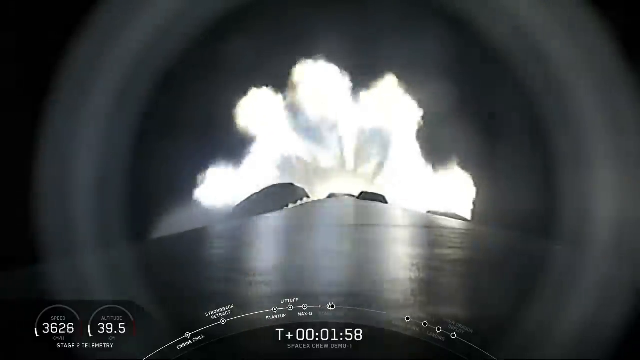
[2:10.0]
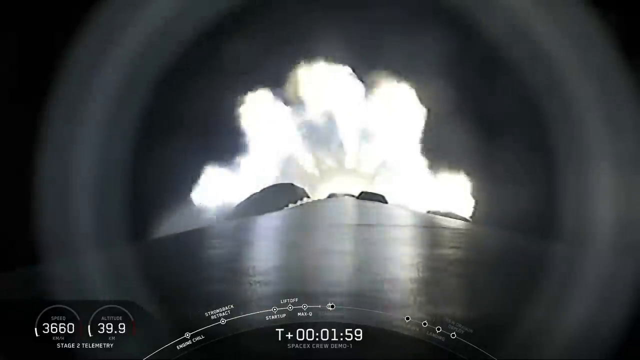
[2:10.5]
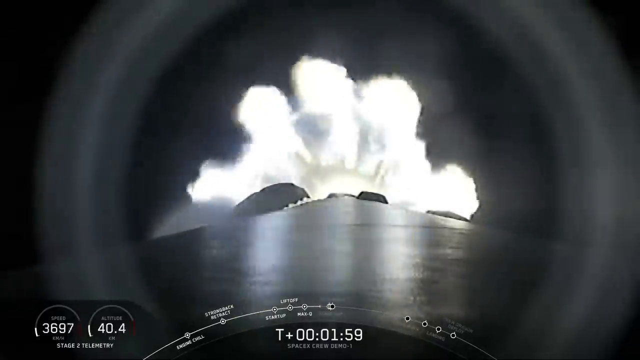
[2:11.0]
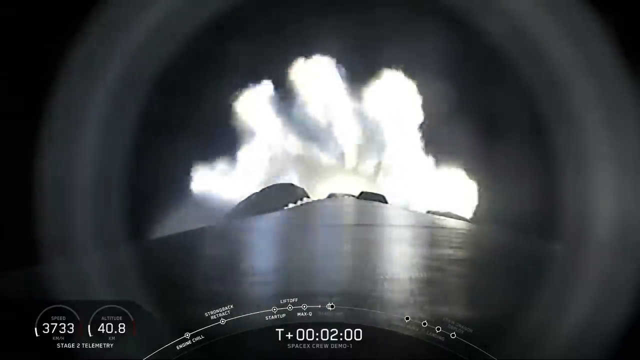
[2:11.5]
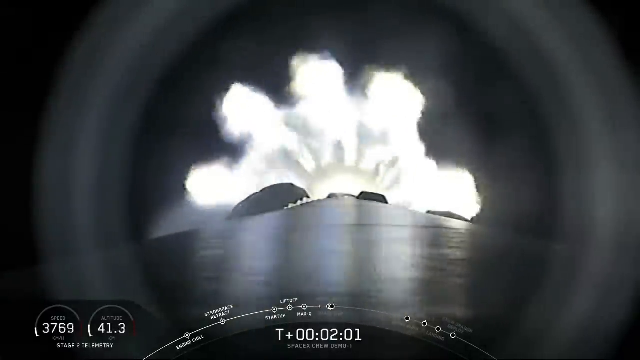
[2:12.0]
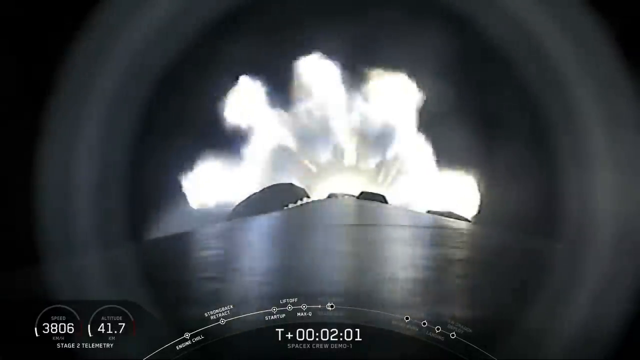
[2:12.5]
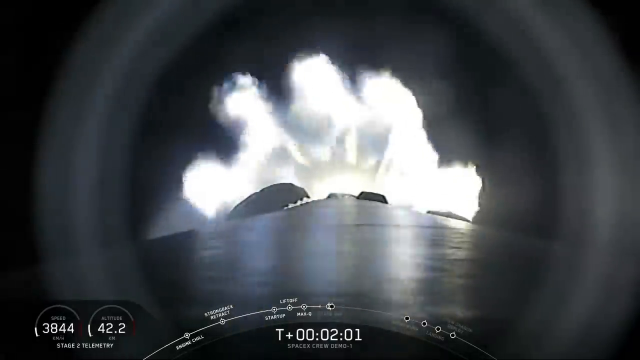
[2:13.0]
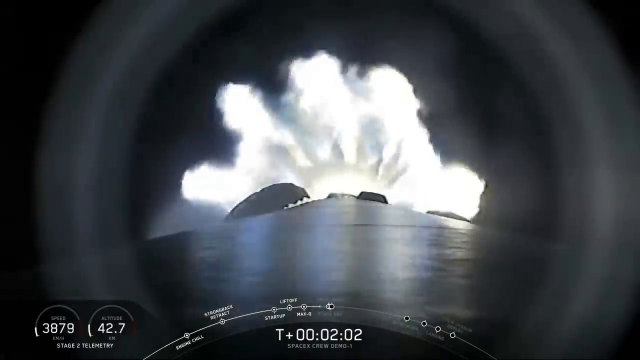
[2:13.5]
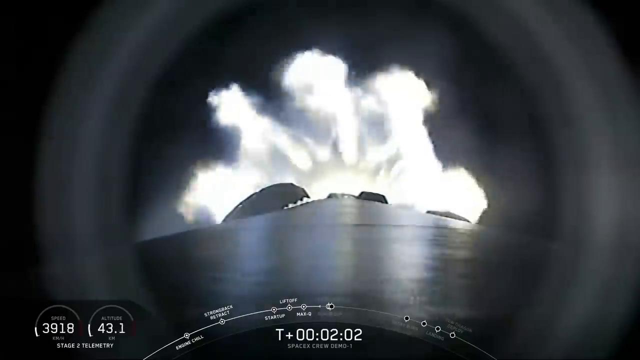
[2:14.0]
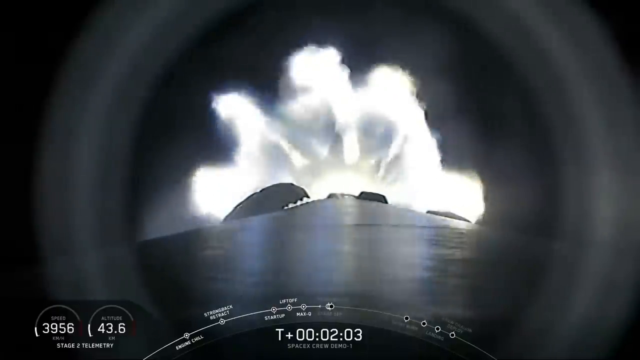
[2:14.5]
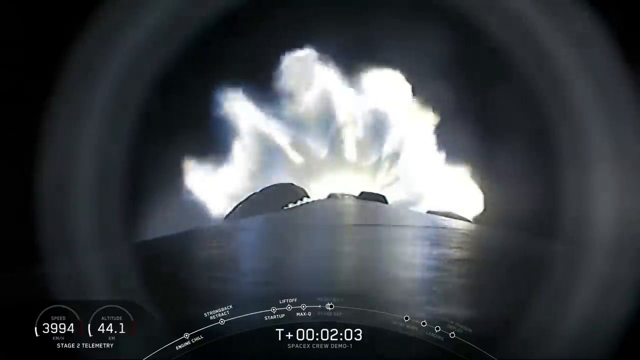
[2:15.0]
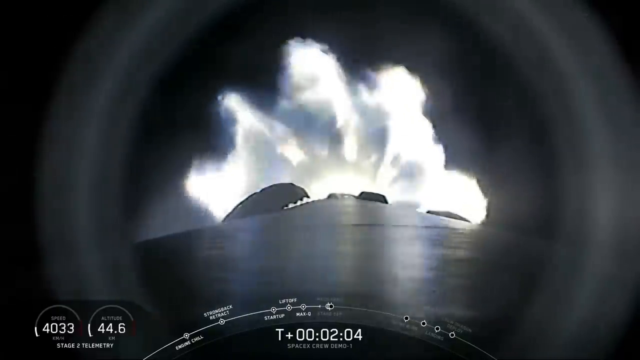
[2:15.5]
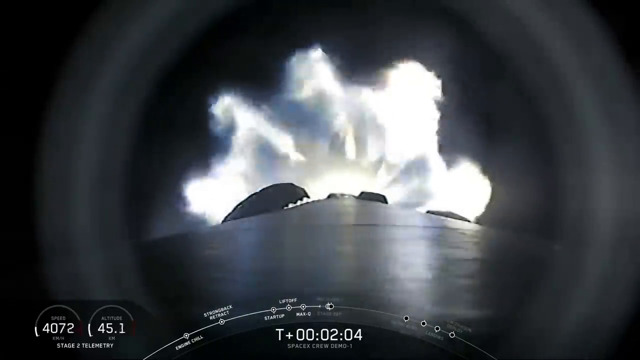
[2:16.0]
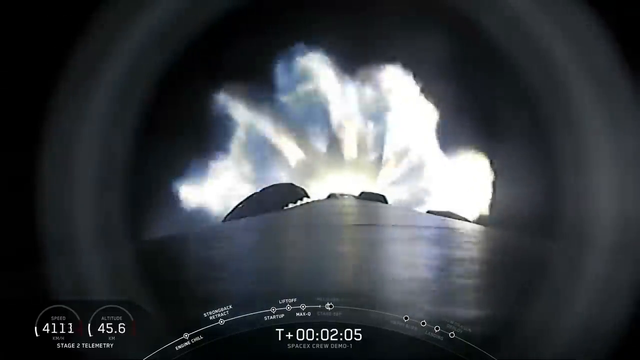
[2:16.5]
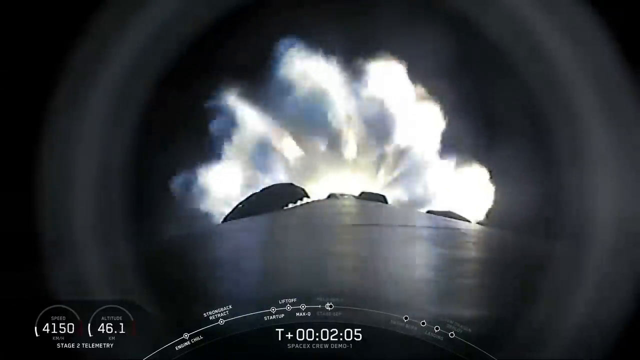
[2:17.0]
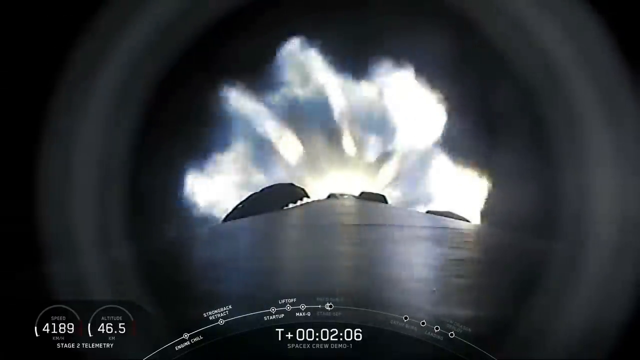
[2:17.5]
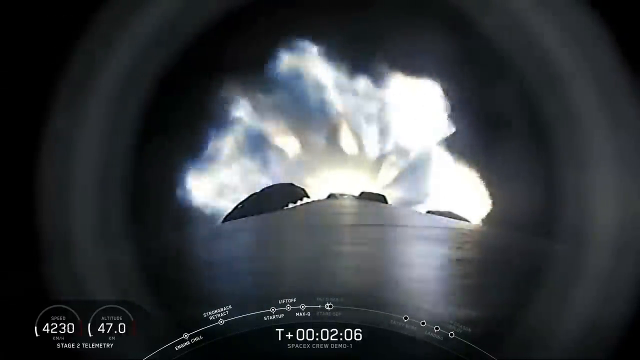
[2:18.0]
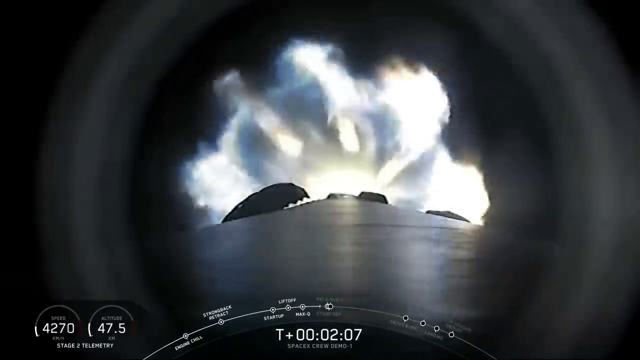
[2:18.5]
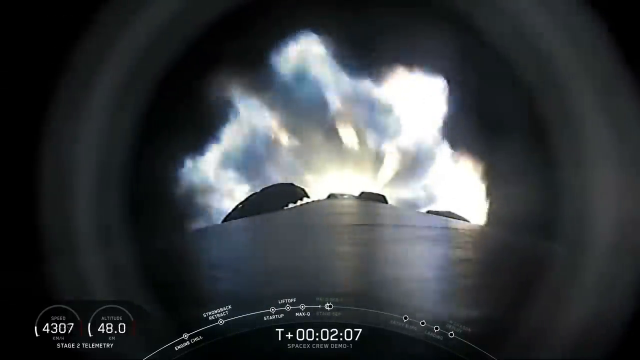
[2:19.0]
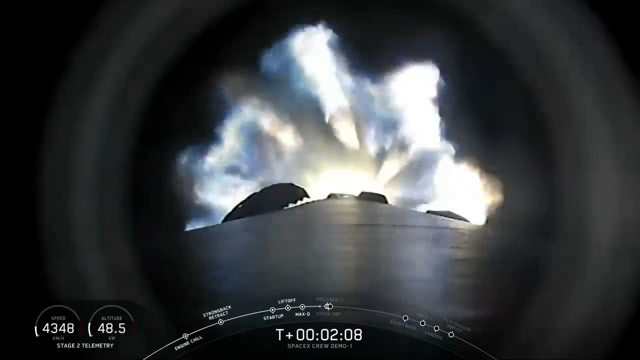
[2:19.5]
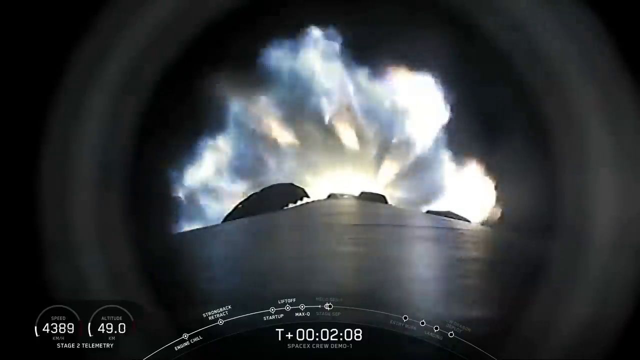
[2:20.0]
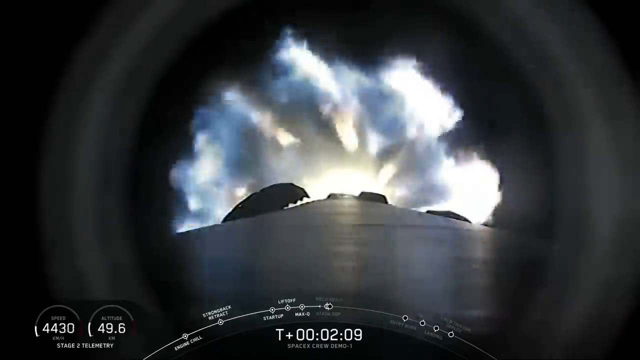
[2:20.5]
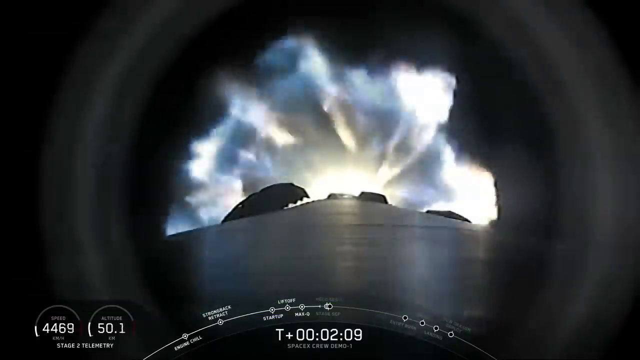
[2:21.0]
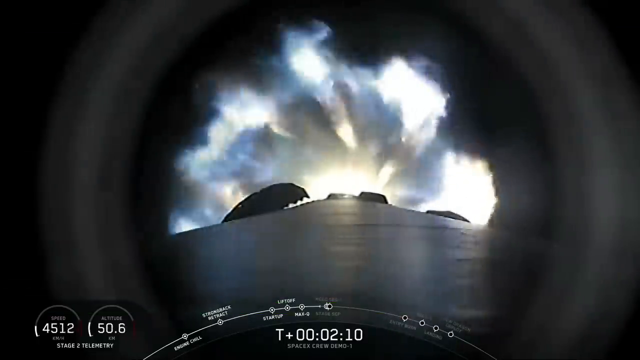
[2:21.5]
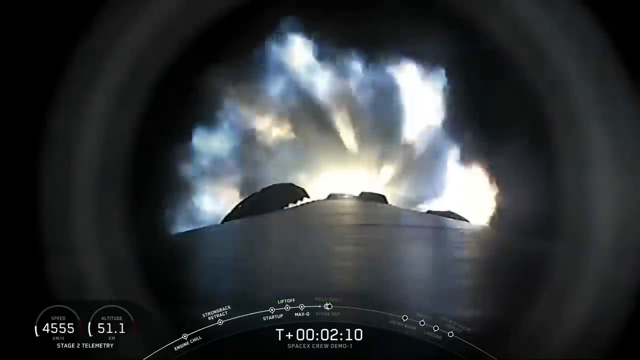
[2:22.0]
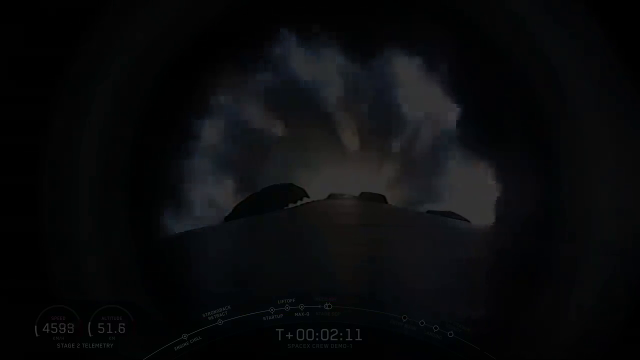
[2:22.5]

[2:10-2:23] As the timer passes two minutes, the close-up onboard camera continues looking down the rocket at the fire, which has gone from bright orange to more of a bright white glow. The circular halo effect still forms a perfect circle around the rocket base, with its edges at the left and right of the screen. The speed has increased to 4,000 kilometers an hour and the altitude is over 44 kilometers, shown on the telemetry gauges in the bottom left, with the progress arc in the bottom middle of the screen. This is the final view before the shot fades out to black and the video ends.